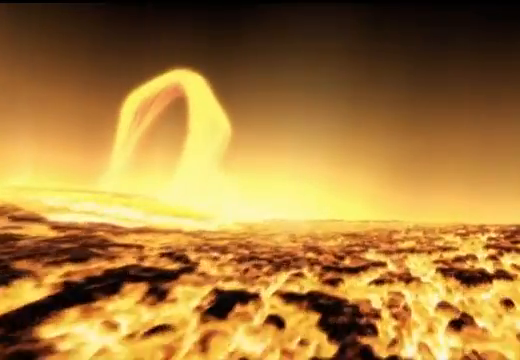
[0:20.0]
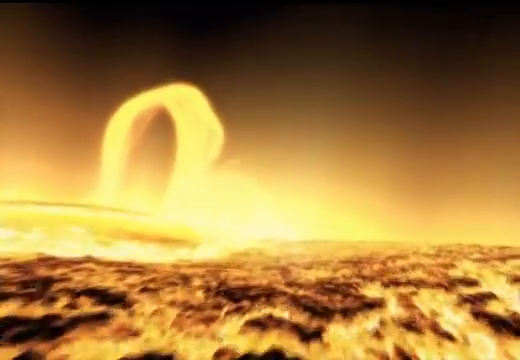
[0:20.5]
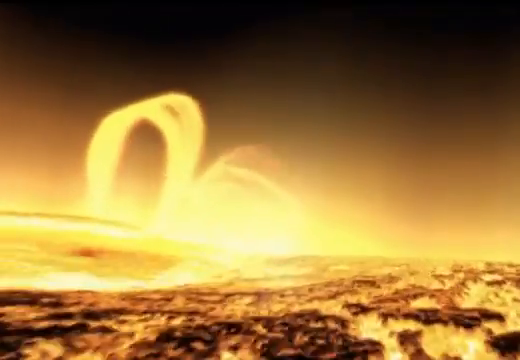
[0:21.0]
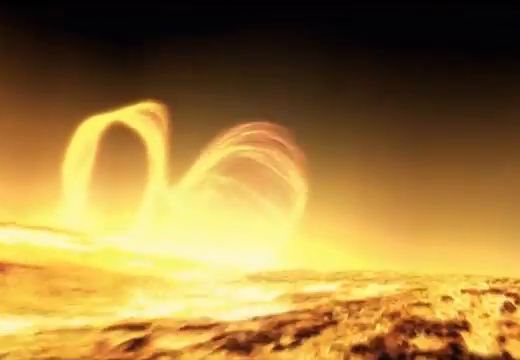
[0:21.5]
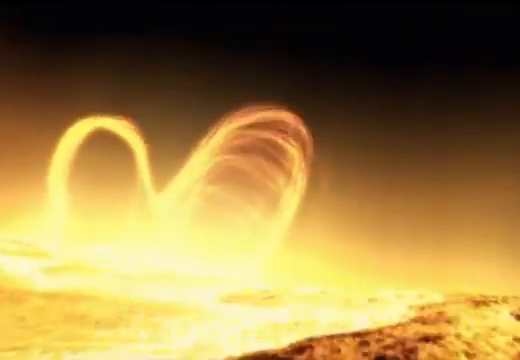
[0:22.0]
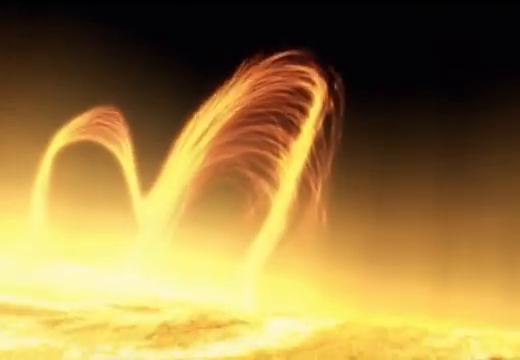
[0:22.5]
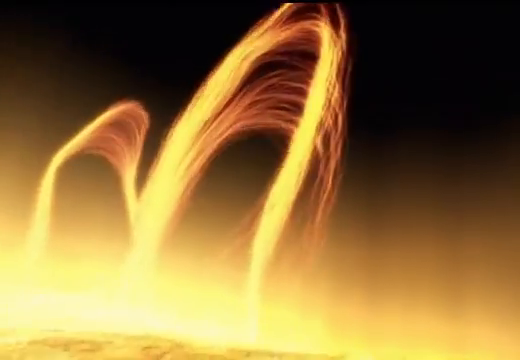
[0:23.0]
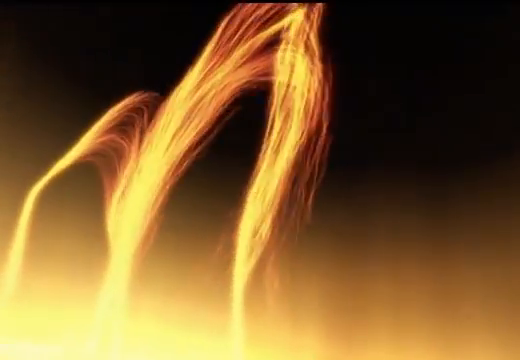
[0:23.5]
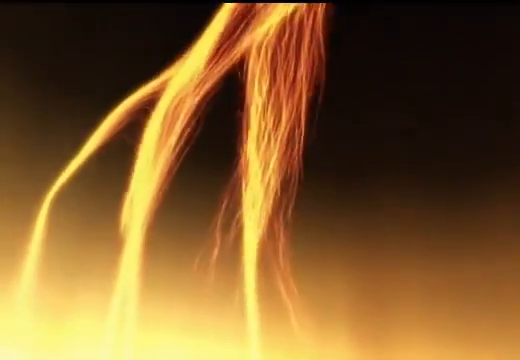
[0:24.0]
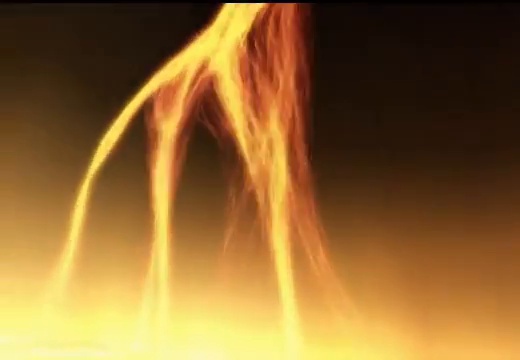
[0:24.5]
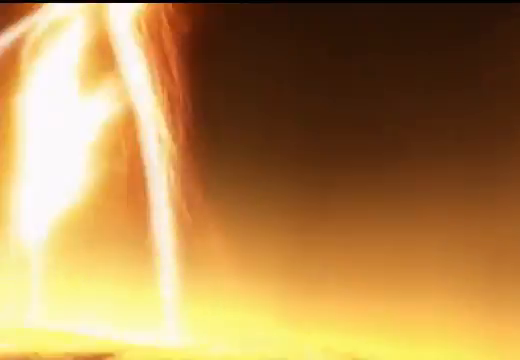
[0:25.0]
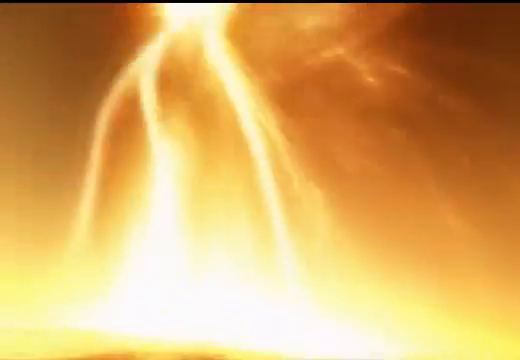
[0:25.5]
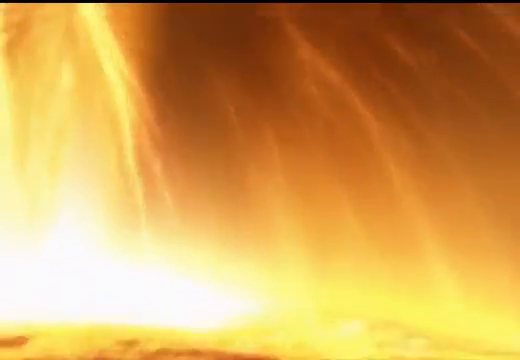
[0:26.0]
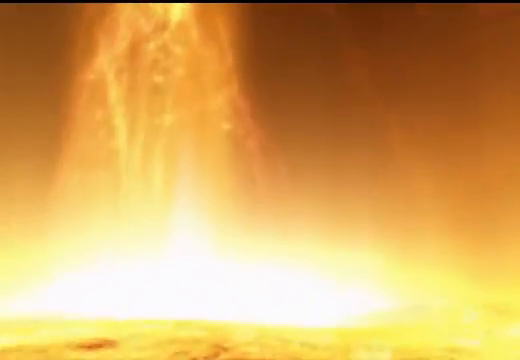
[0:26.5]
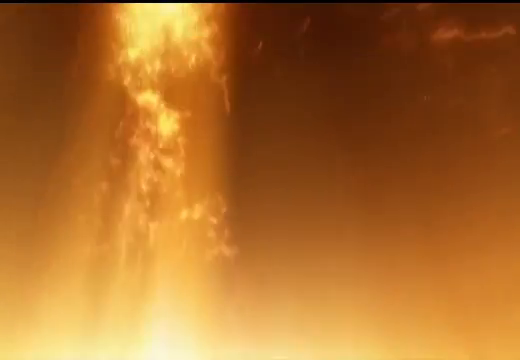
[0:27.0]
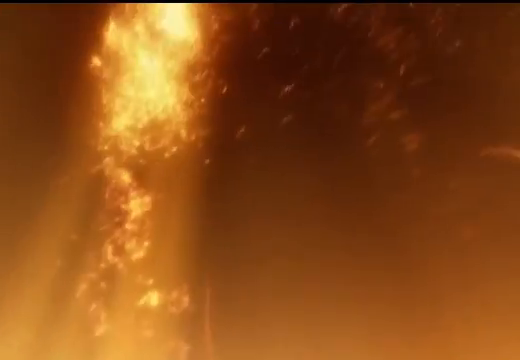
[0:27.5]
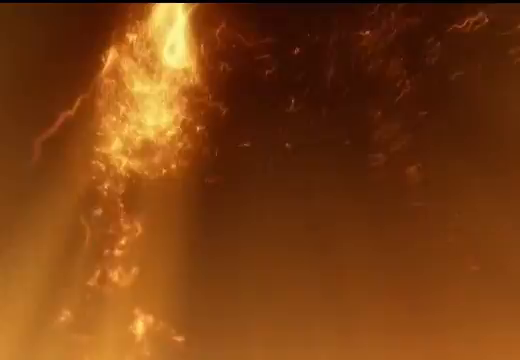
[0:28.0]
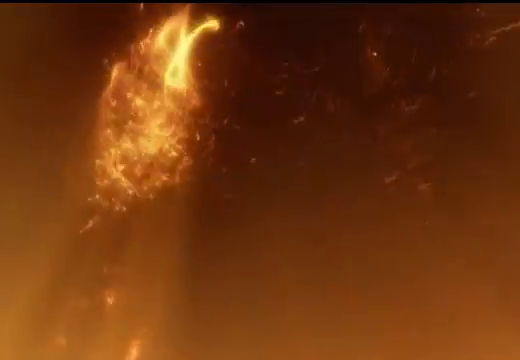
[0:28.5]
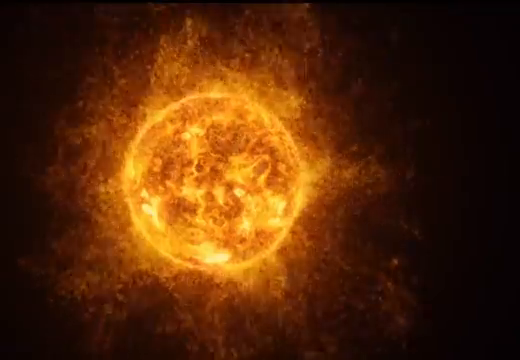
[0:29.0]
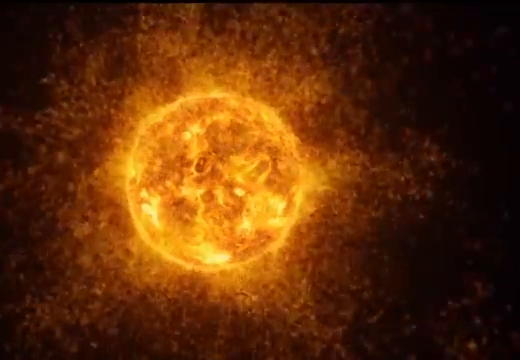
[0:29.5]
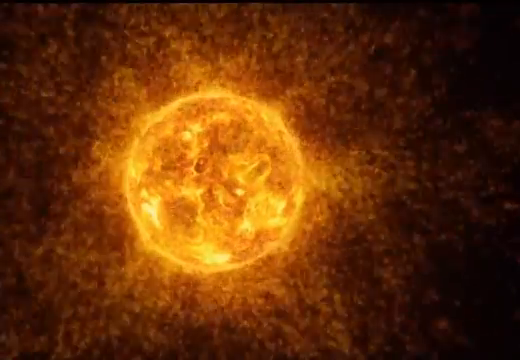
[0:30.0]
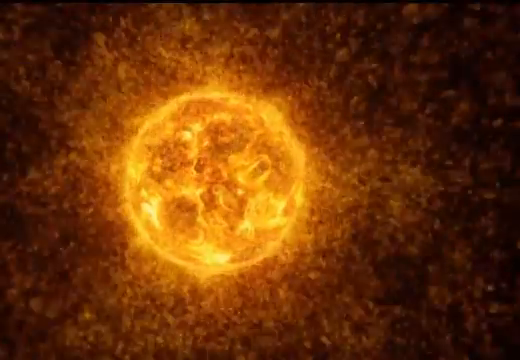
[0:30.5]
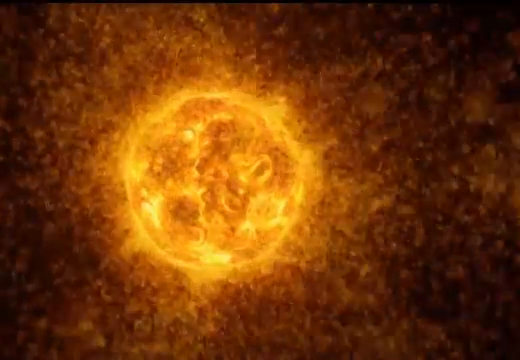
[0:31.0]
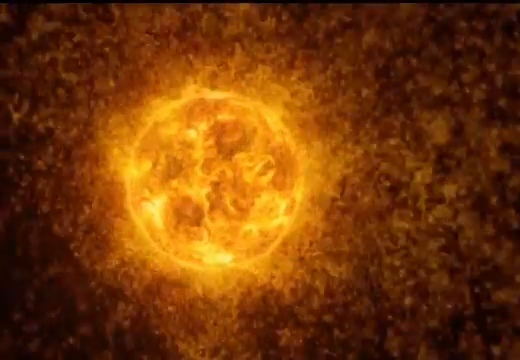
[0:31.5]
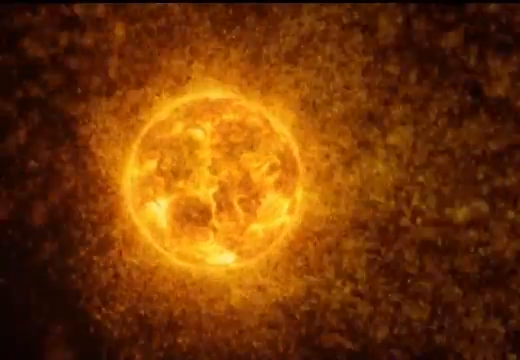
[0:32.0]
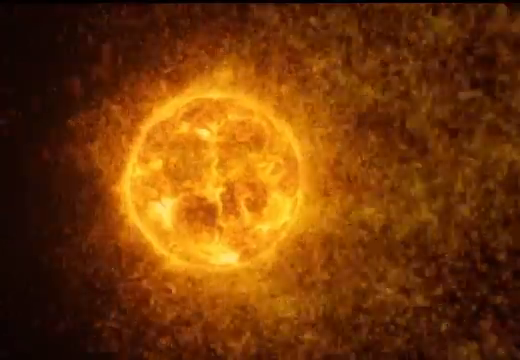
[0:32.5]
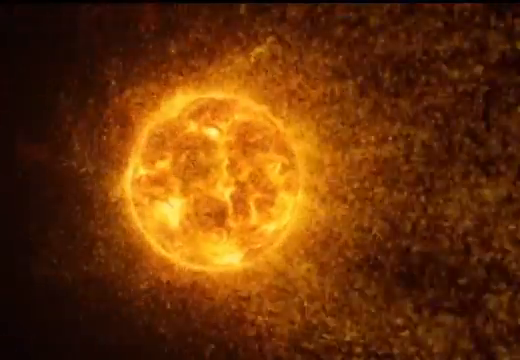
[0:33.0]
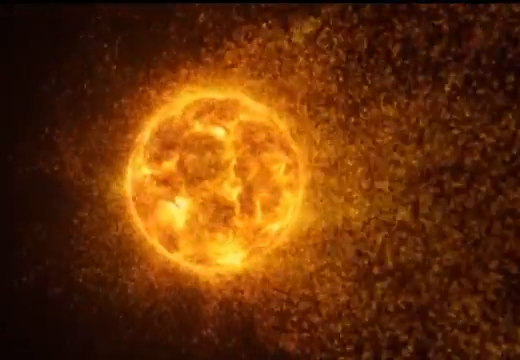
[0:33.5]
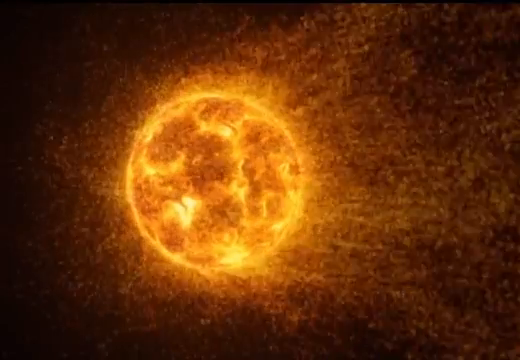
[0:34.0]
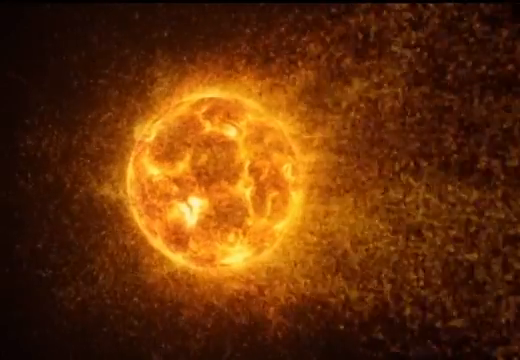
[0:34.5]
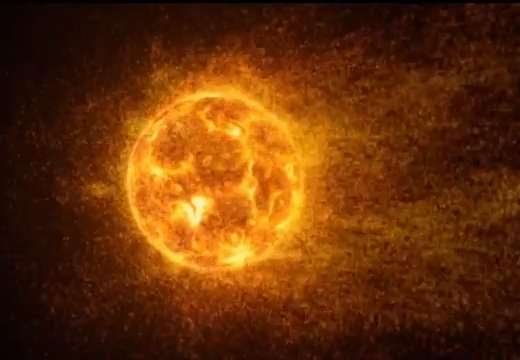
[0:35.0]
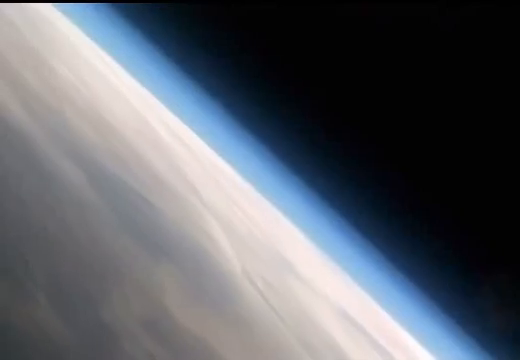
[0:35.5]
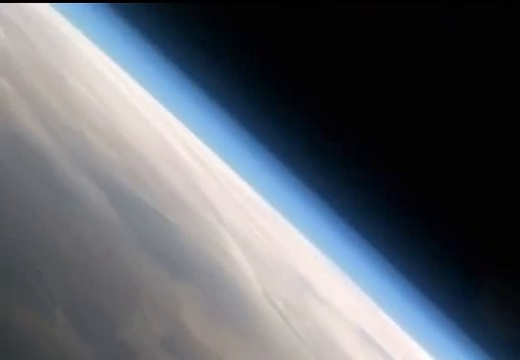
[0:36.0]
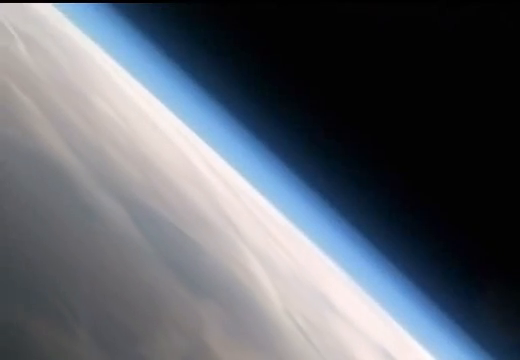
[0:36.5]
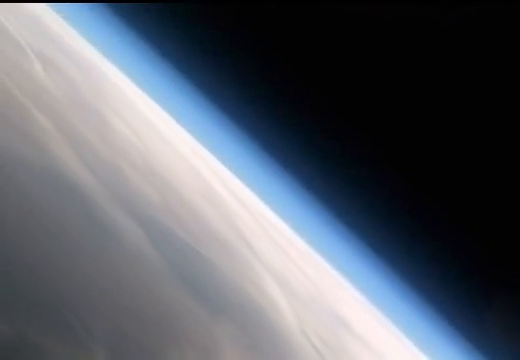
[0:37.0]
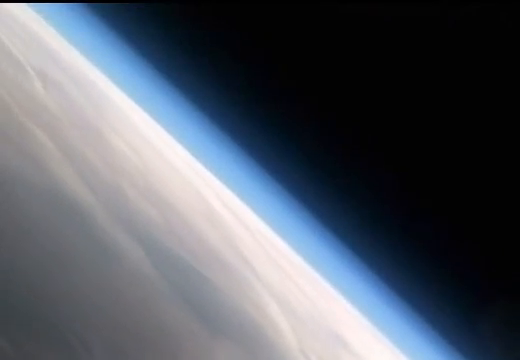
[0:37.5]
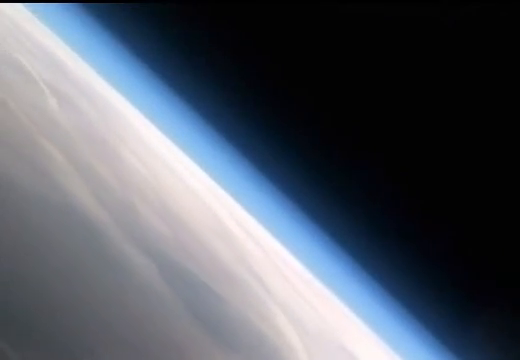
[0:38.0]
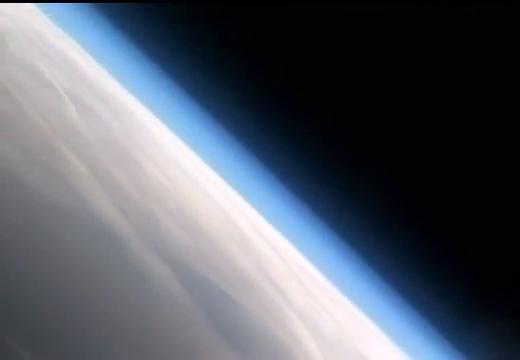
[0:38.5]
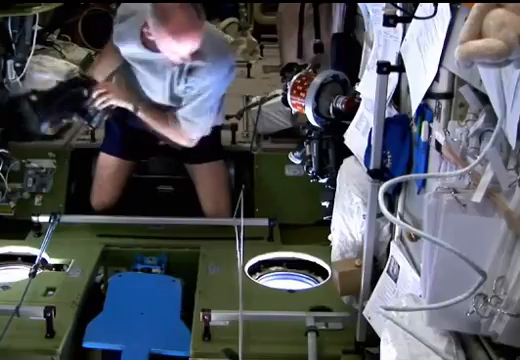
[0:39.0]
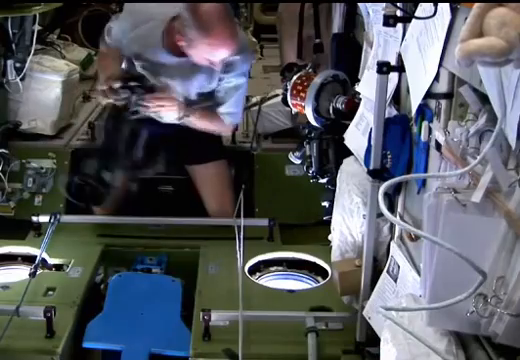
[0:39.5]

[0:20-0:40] A close-up view shows the outside of the round object, which looks like the sun, with several flares around the shape emitting out from it. What seems to be a very big explosion occurs as the view pans out. A zoomed-out view shows the sun rotating to the right, and several orange particles emit from the round object. Next comes a flat type of planet, mostly gray and outlined with translucent blue. The view then moves to an indoor setting that looks like the inside of a spaceship, where a man wearing black shorts and a gray shirt, who appears to be white Caucasian, has a very big microscope that he looks to be getting ready to insert into one of the holes in the room.